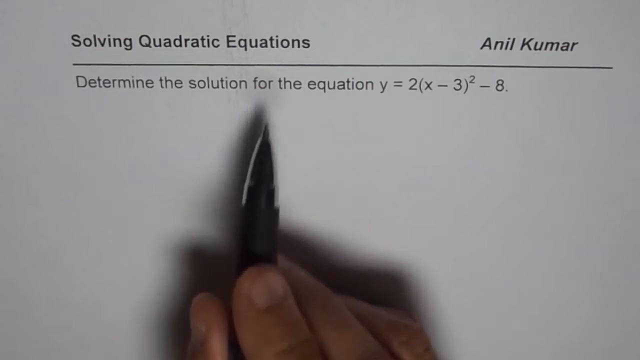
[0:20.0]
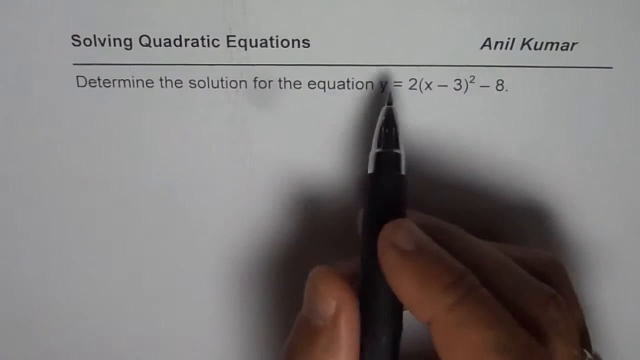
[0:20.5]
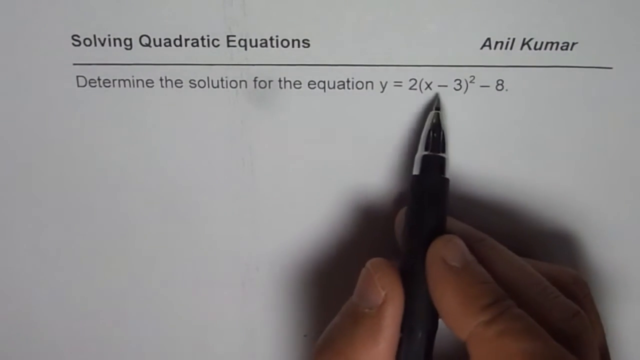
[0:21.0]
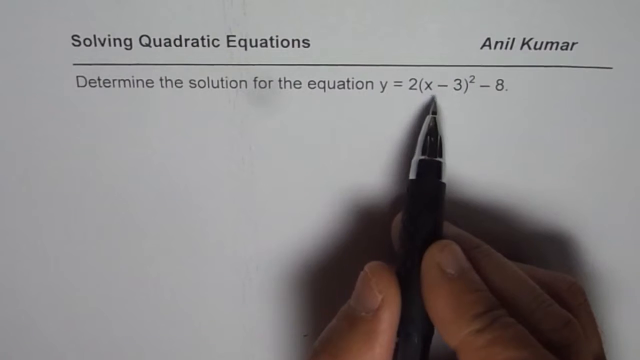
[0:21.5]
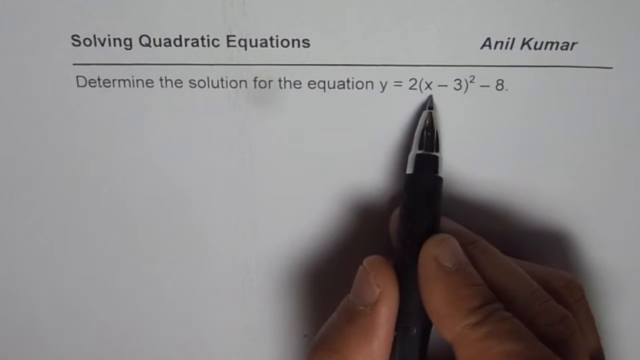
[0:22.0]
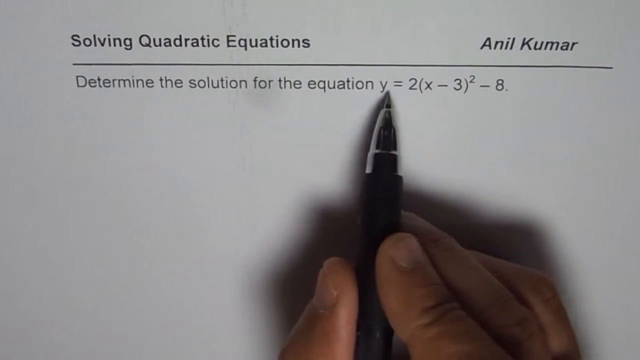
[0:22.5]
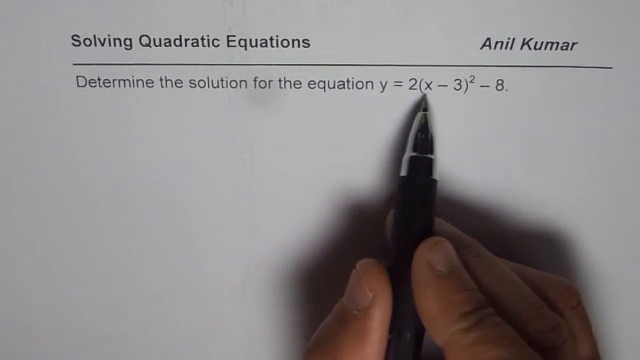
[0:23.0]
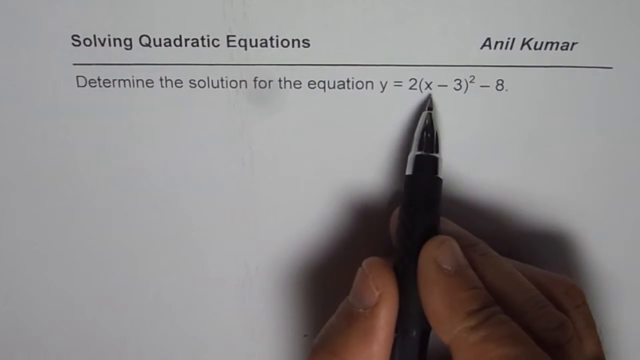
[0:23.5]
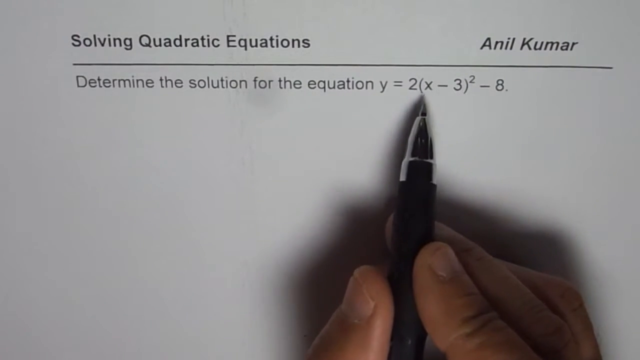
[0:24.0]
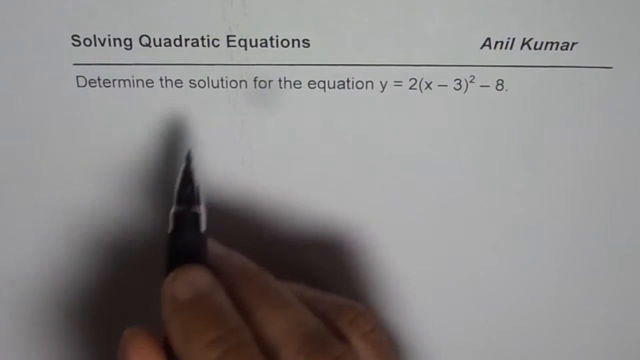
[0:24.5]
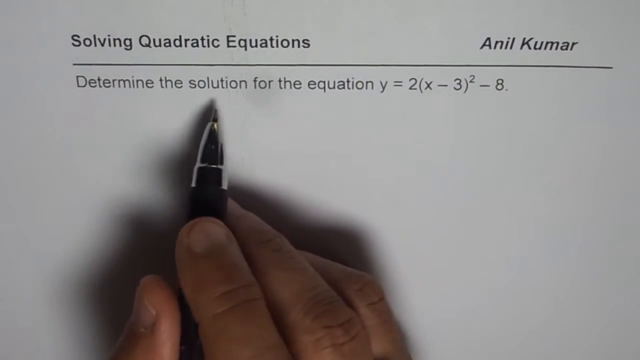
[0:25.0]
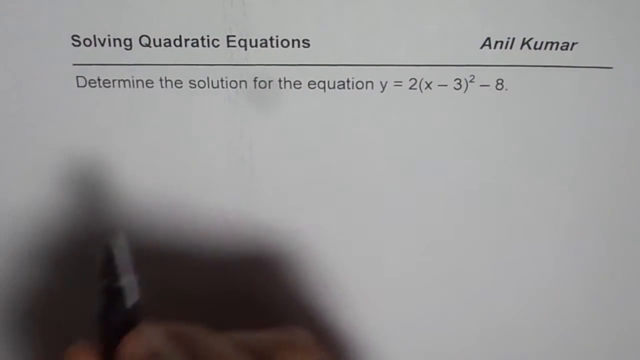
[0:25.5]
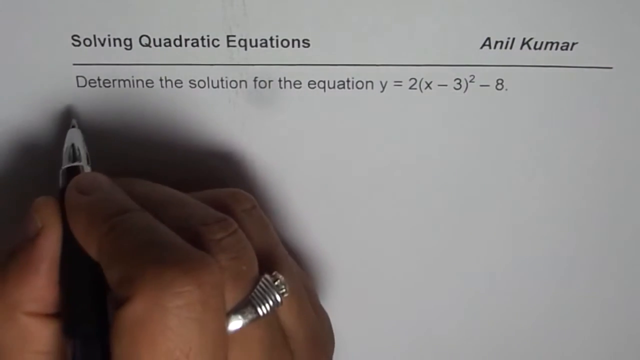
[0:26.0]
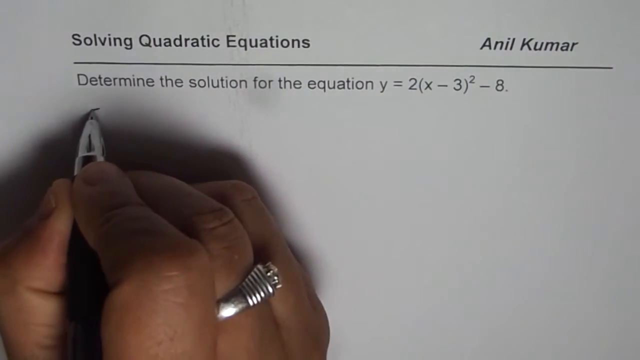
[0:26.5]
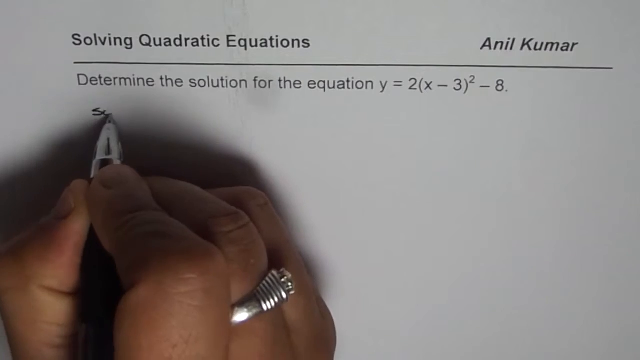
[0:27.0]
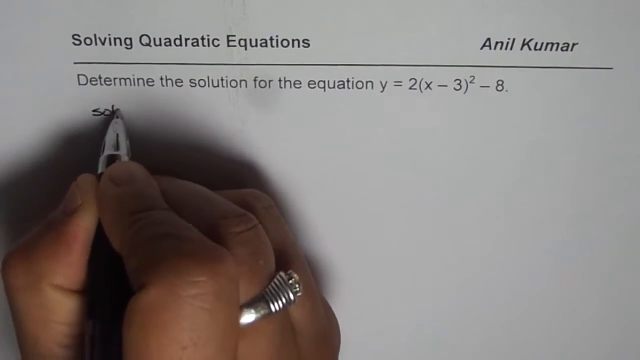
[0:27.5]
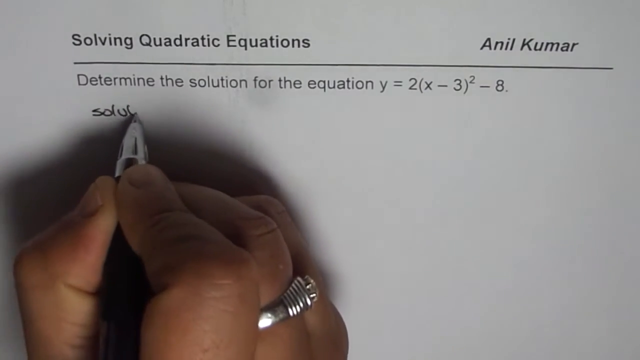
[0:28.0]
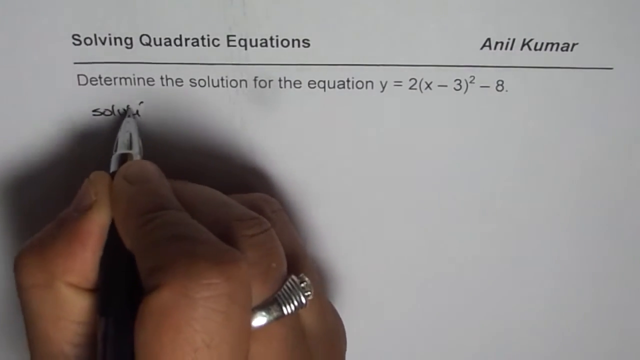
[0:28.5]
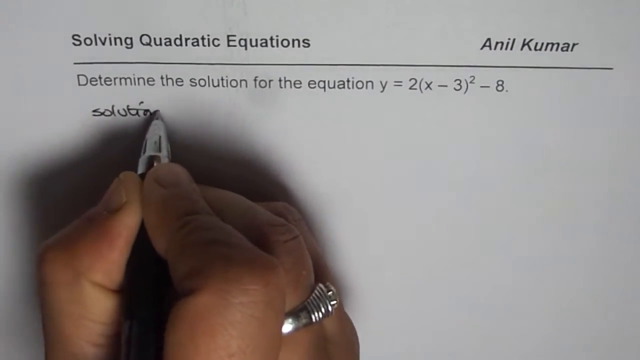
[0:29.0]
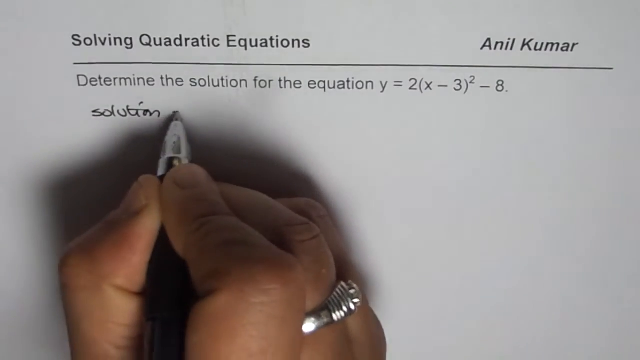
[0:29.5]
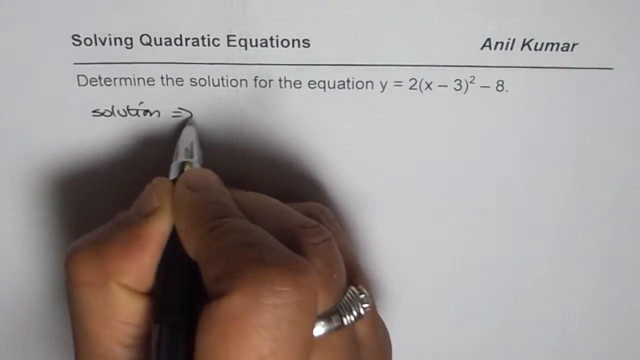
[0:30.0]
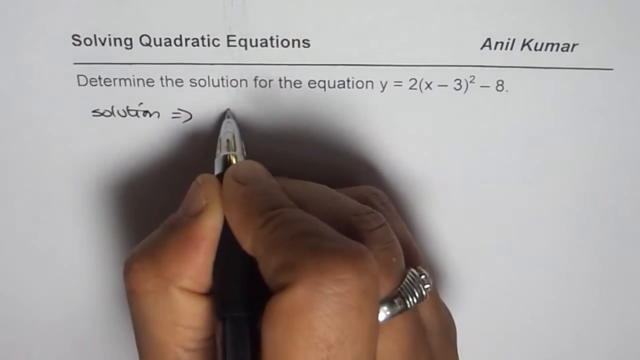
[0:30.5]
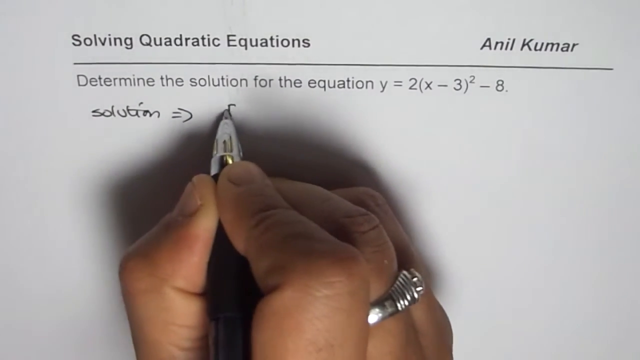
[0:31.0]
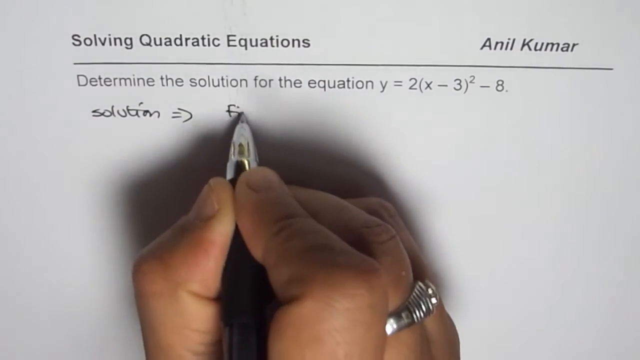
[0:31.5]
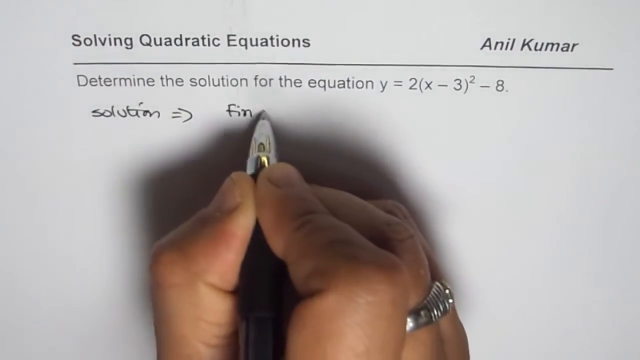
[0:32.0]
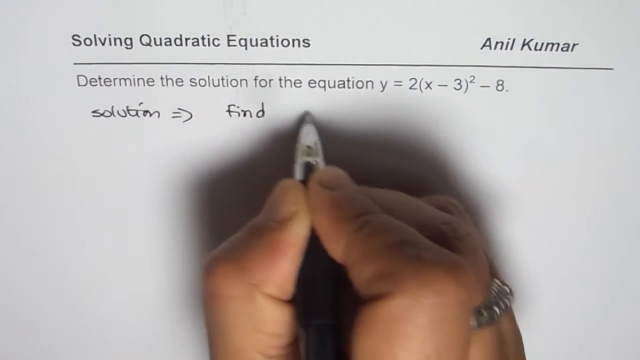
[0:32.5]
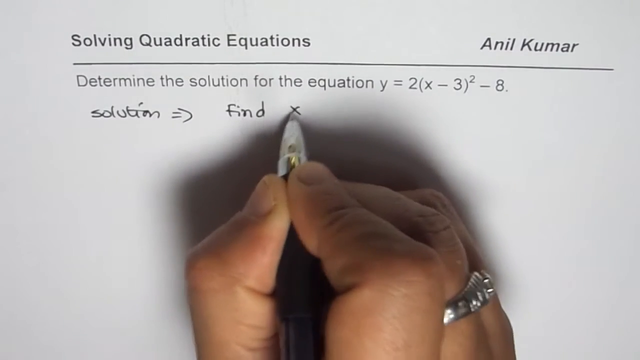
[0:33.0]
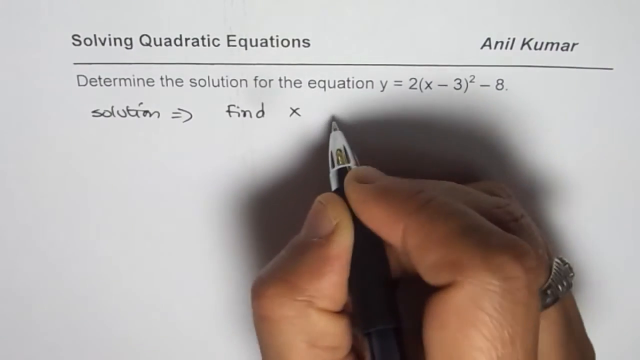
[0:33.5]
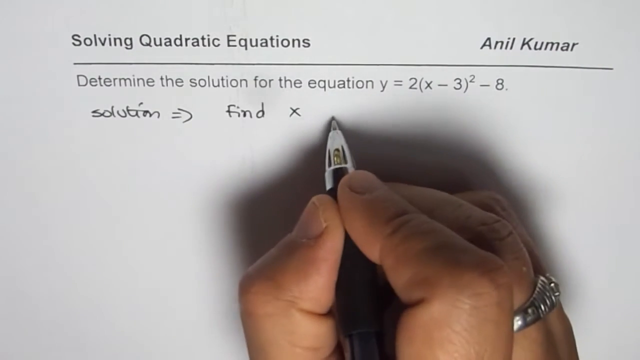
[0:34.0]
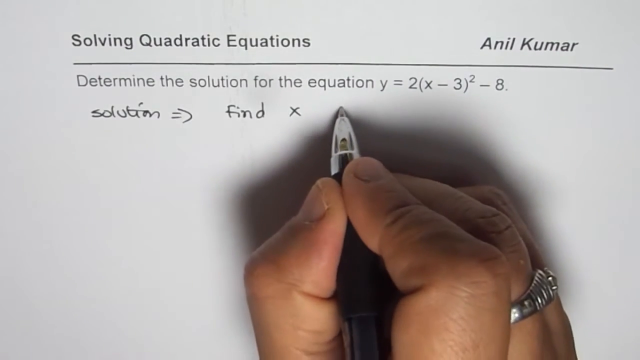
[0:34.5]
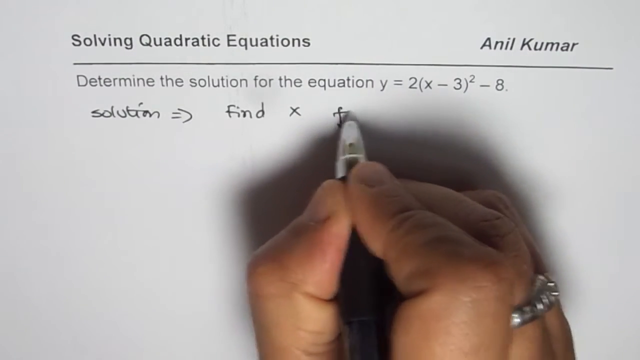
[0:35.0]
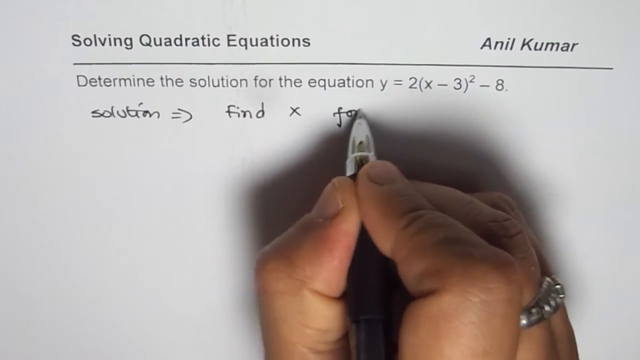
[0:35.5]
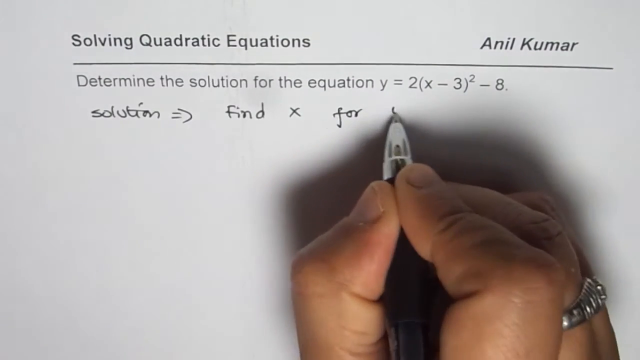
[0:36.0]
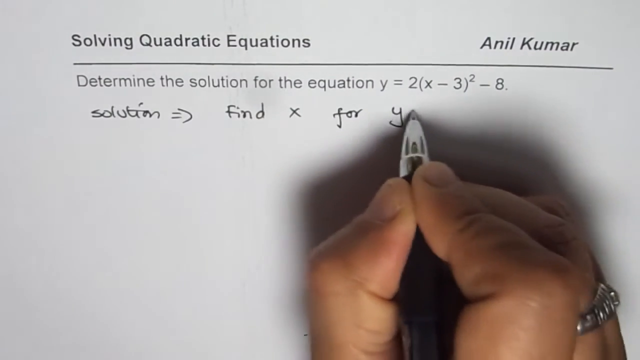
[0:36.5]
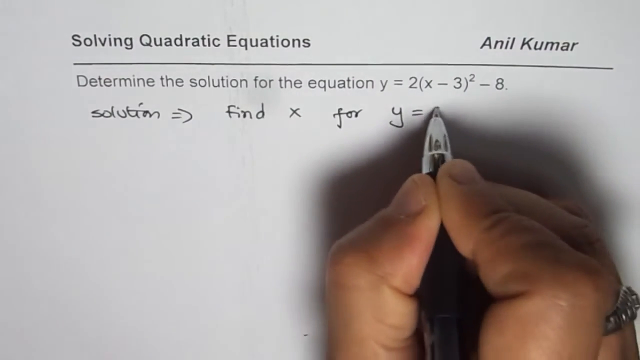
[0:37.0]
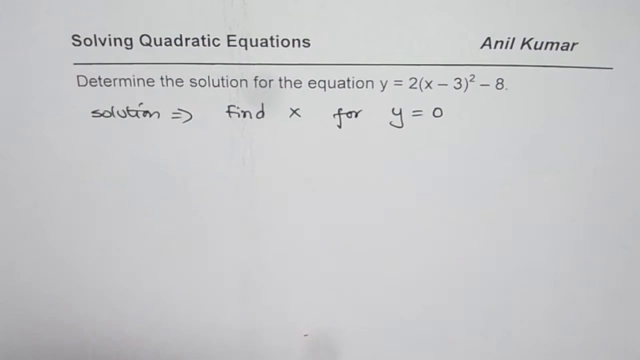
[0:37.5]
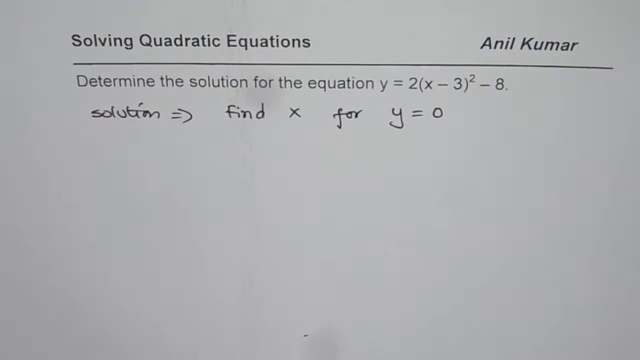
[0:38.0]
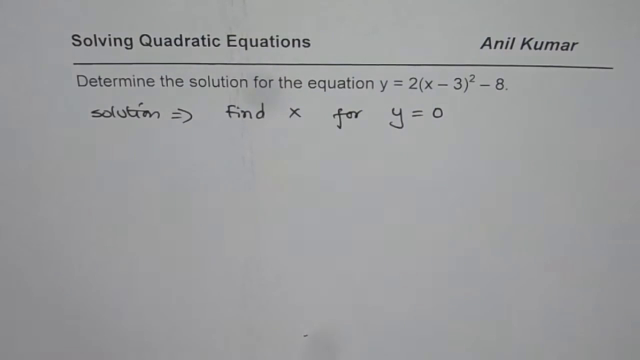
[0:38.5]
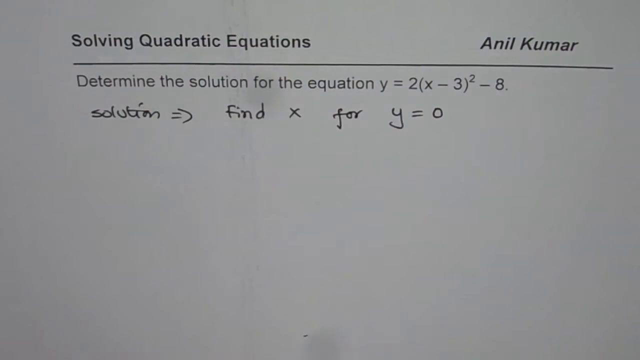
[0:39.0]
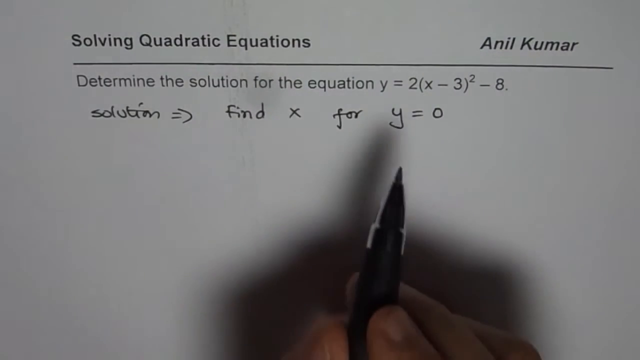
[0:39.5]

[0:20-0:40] The same paper shows "solving quadratic equations", the name, and the task to determine the solution for the equation "y = 2(x − 3)² − 8". A man's hand with very small nails holds a black pen with silver, wearing a silver item on his middle finger, and writes "solution = find x for y = 0" on the white paper.